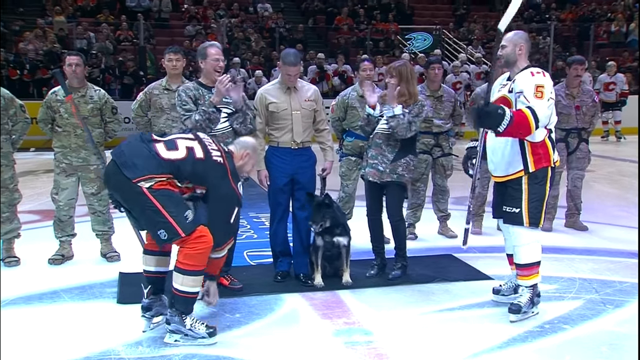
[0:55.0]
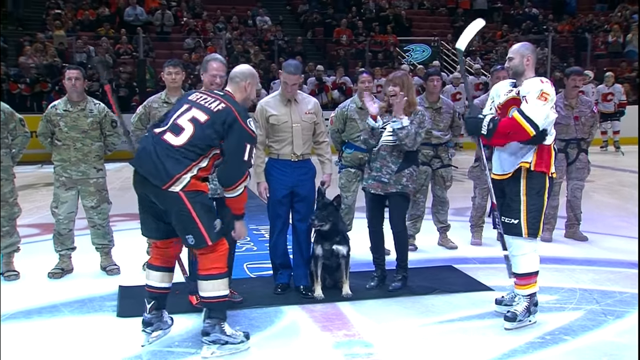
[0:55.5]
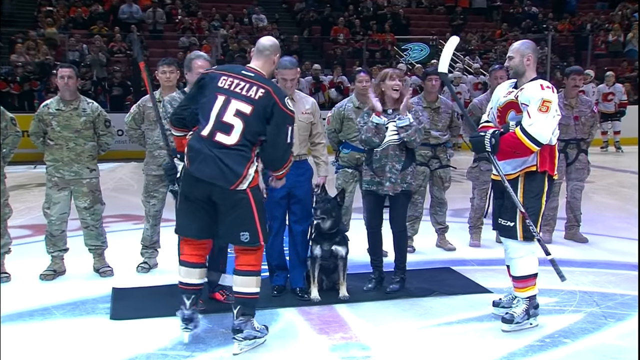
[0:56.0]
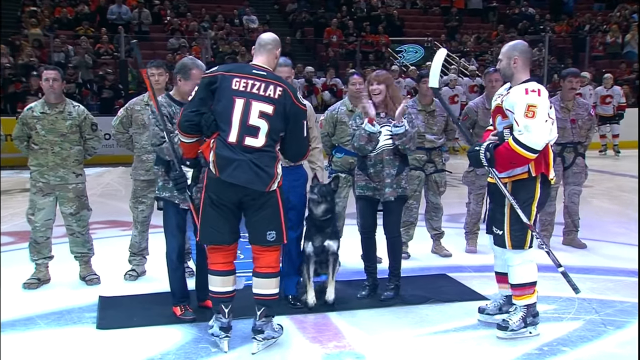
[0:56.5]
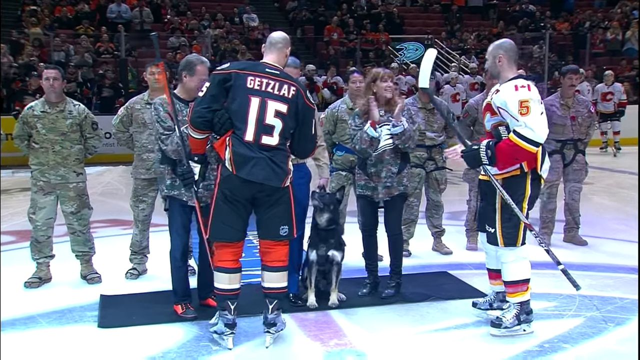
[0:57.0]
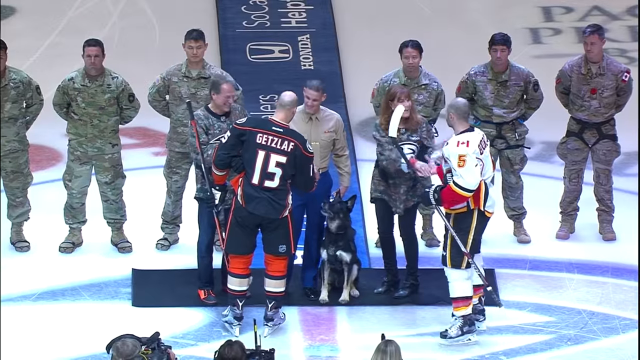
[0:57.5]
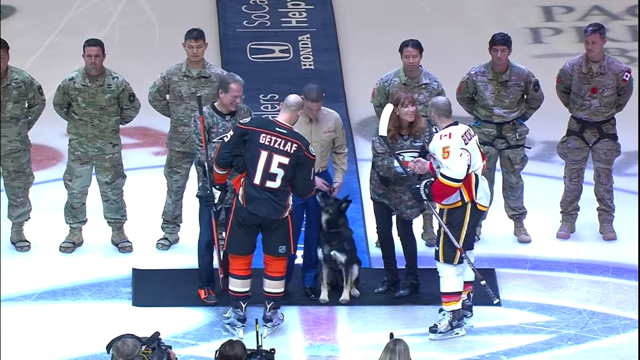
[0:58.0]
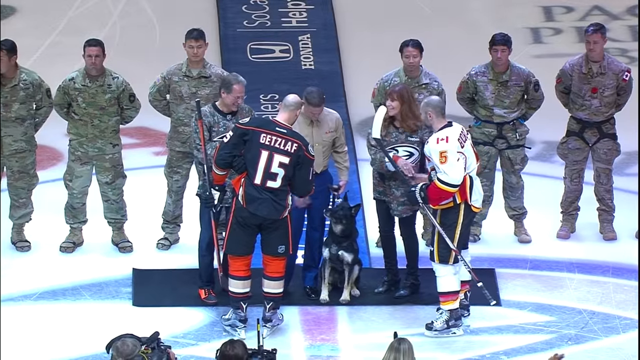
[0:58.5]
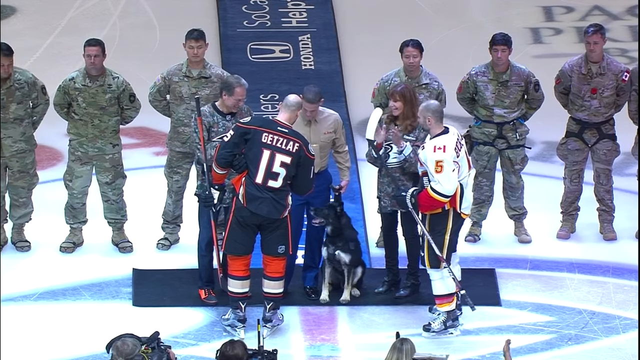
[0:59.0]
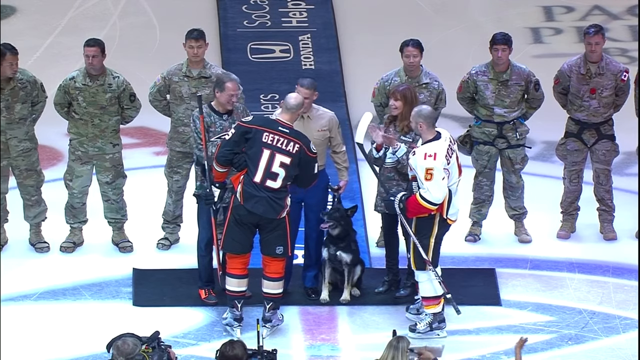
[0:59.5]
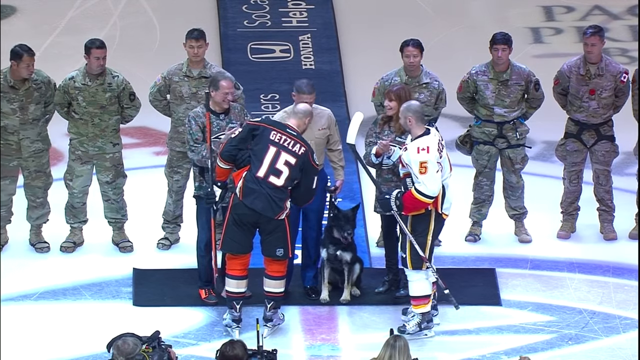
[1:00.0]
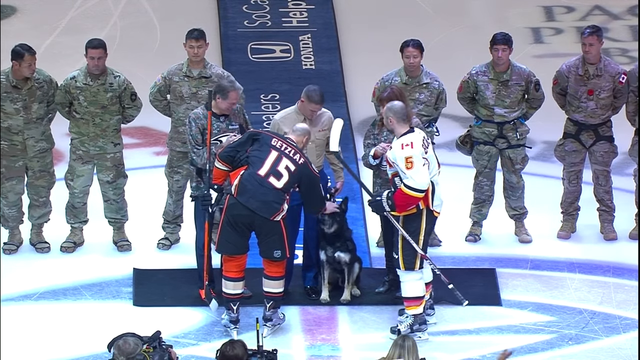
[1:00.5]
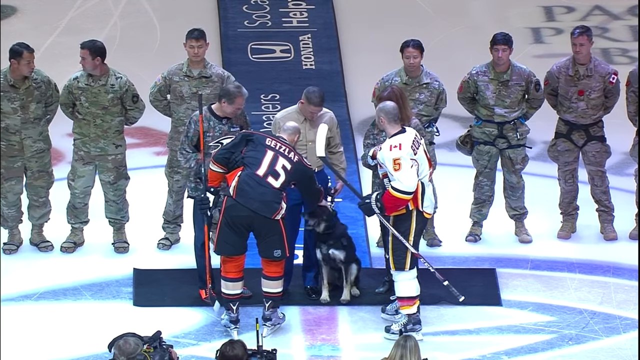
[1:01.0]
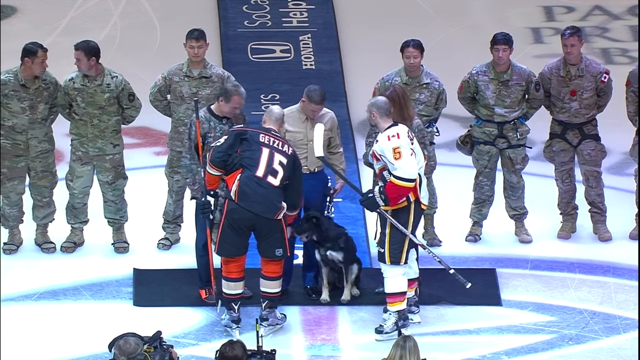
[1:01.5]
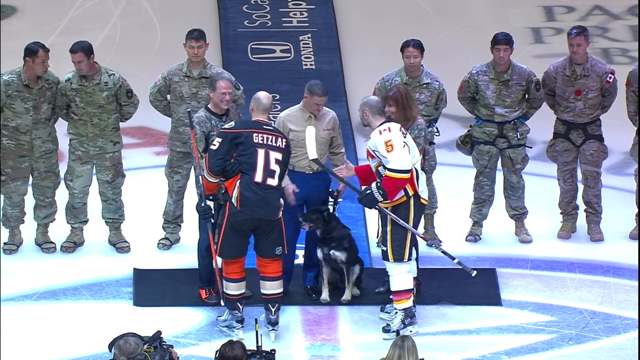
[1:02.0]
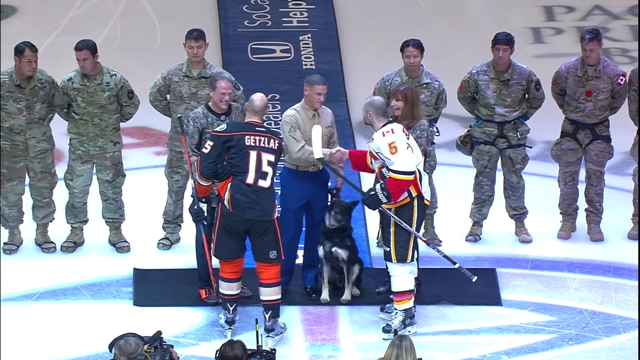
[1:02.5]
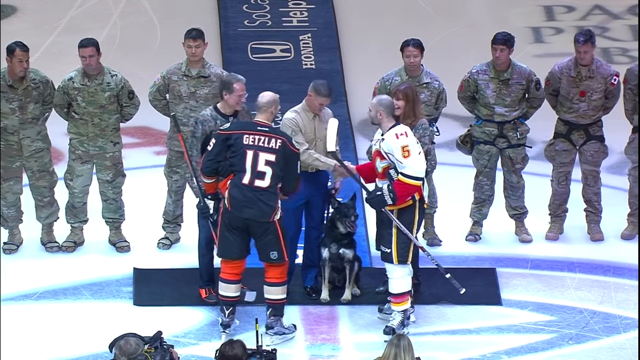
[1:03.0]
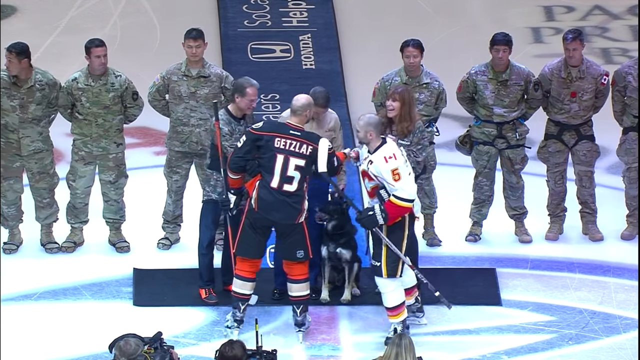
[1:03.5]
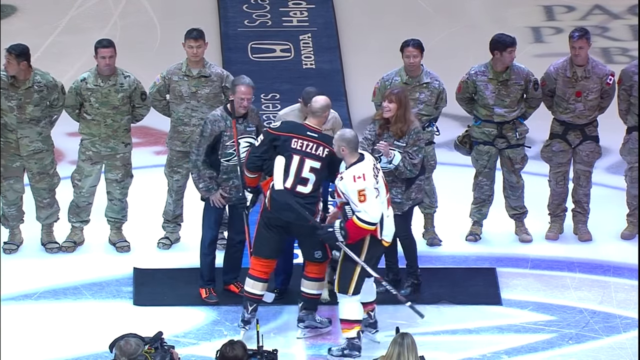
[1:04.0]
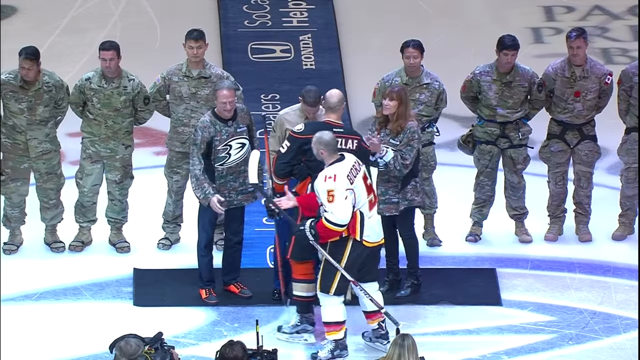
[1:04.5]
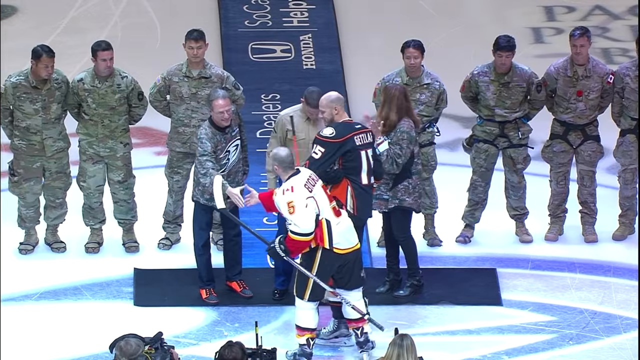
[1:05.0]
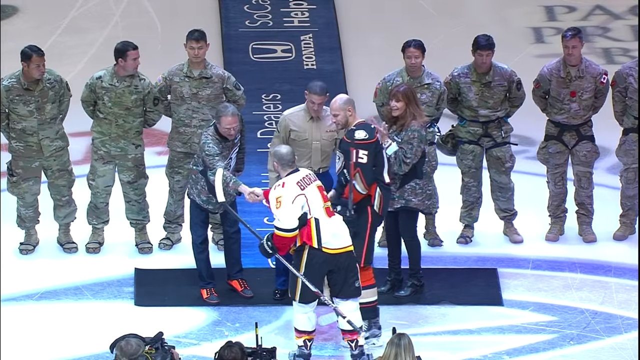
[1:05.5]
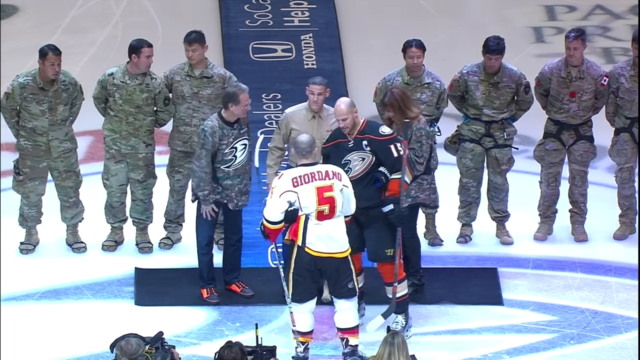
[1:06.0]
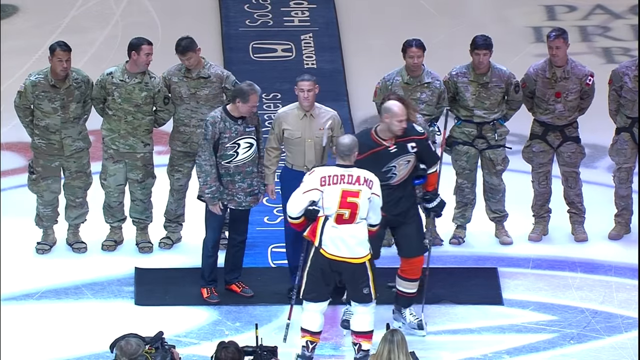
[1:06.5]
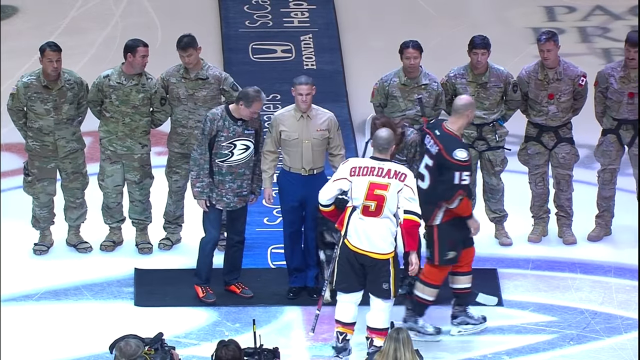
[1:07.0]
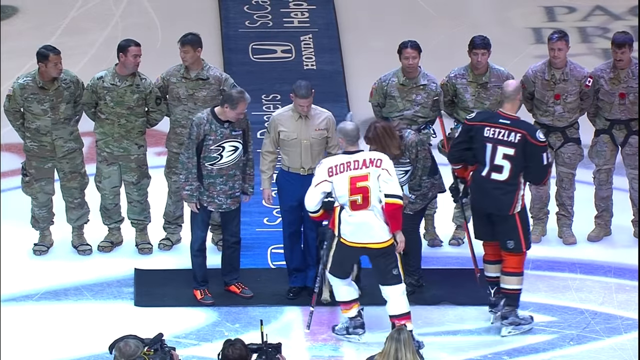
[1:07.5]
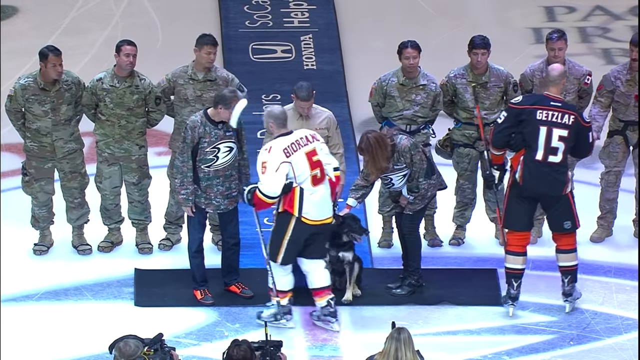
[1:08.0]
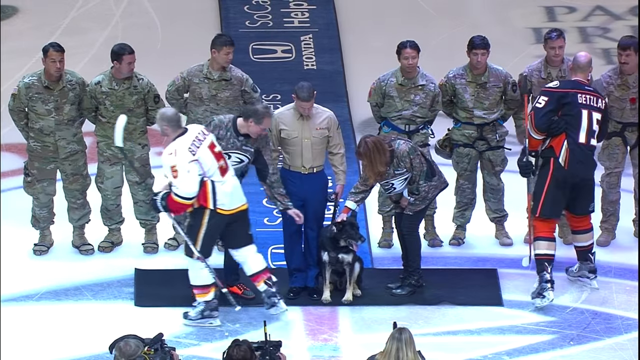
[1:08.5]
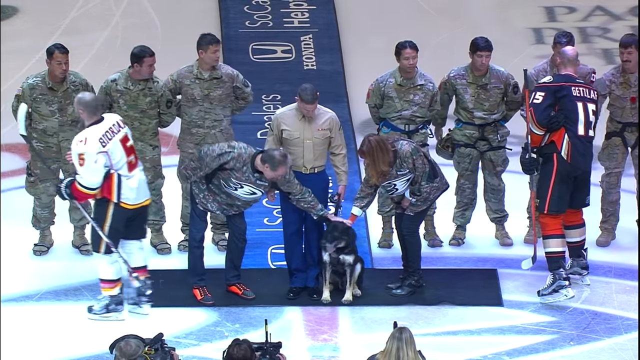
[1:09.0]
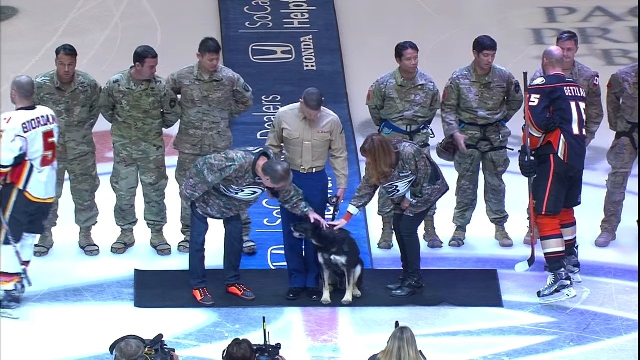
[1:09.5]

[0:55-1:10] A group of people is shown; many in the background stand in a straight line with their arms behind their backs, fully clad in U.S. Army clothing. In front of them are a few more people: two wearing long-sleeve Army-colored shirts and jeans, and a man in a long-sleeve tan shirt and dark blue jeans holding a leash to a dog that is sitting beside him. Hockey players are in front of them: on the left, one in a black-and-orange uniform is bending down to pick something up, and on the right, one in a white and red uniform stands upright. The player in the black-and-orange uniform picks something up and hands it to the man in the tan shirt. The camera zooms out, and the two men shake hands before the hockey player pets the dog. Both hockey players then shake everyone's hand, riding around the gymnasium to do so.